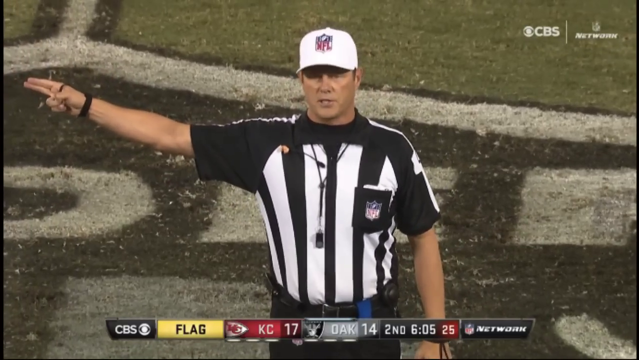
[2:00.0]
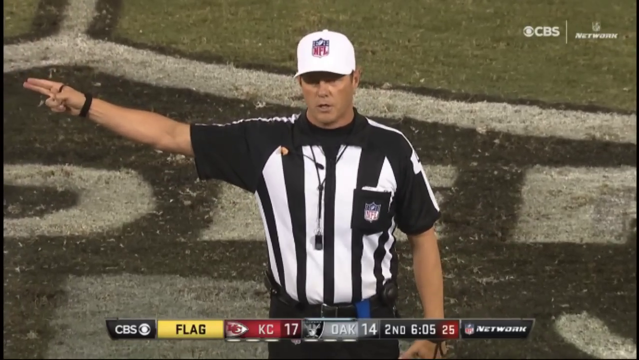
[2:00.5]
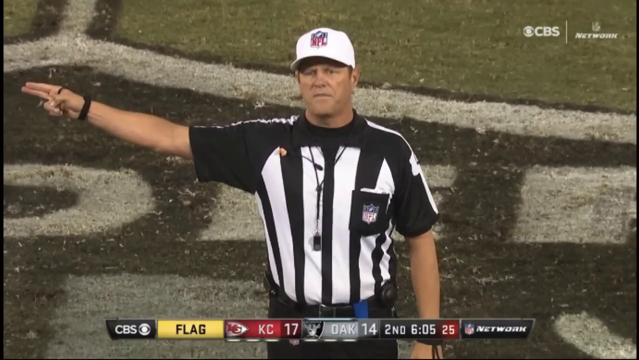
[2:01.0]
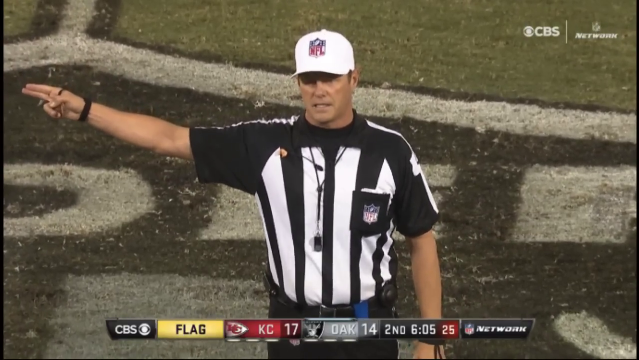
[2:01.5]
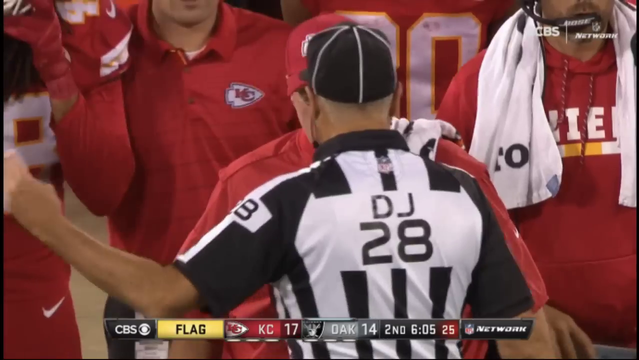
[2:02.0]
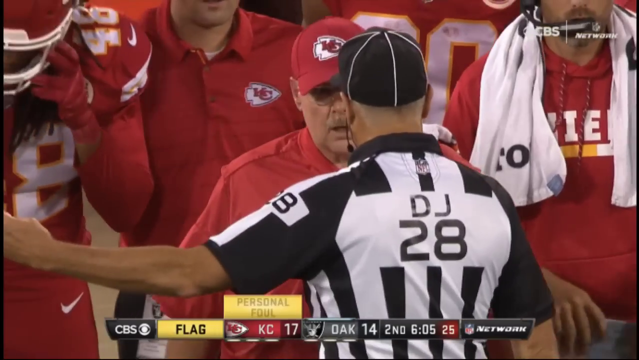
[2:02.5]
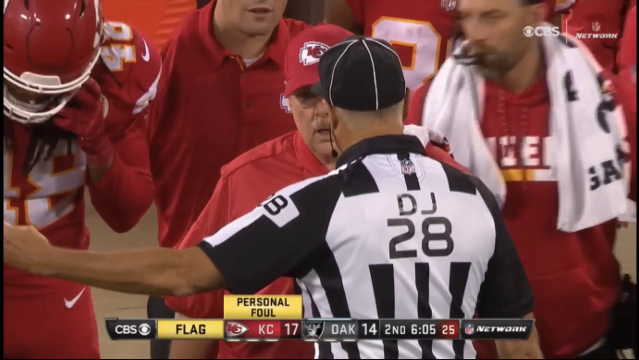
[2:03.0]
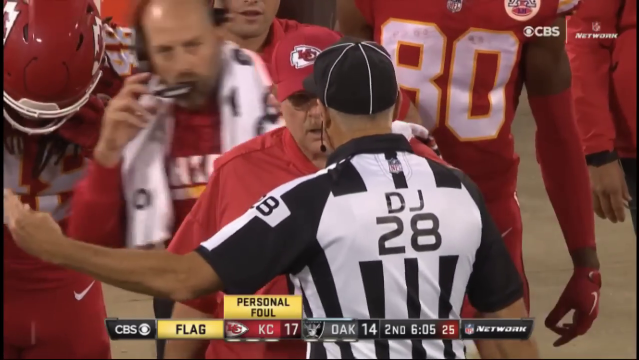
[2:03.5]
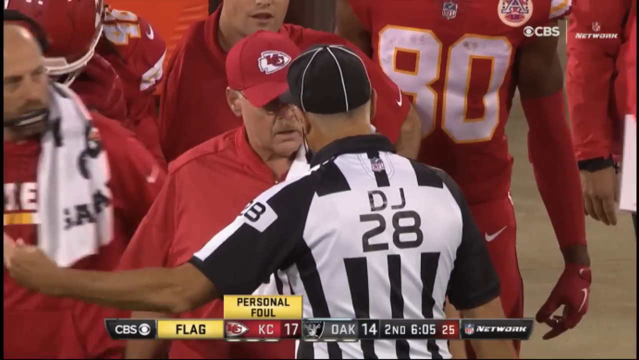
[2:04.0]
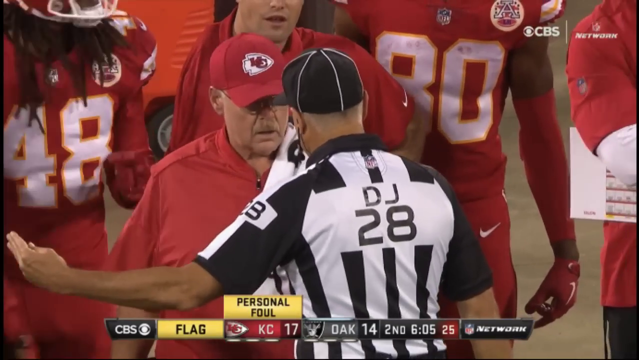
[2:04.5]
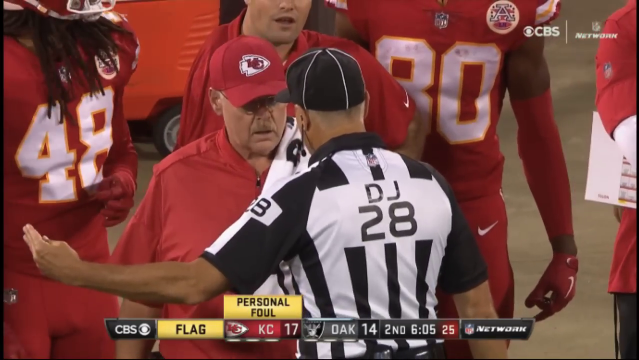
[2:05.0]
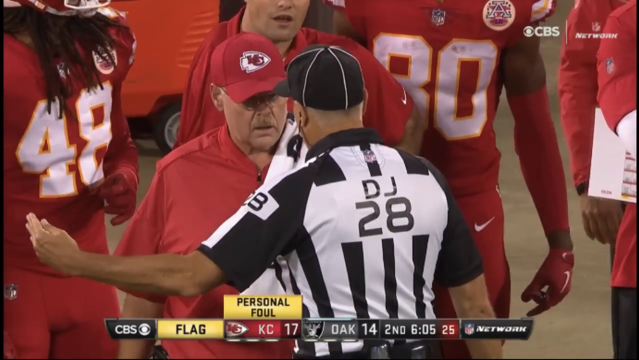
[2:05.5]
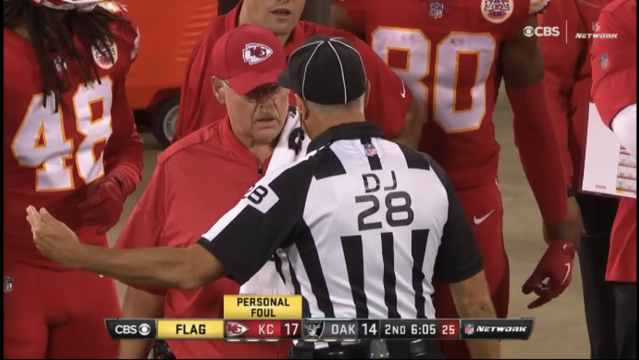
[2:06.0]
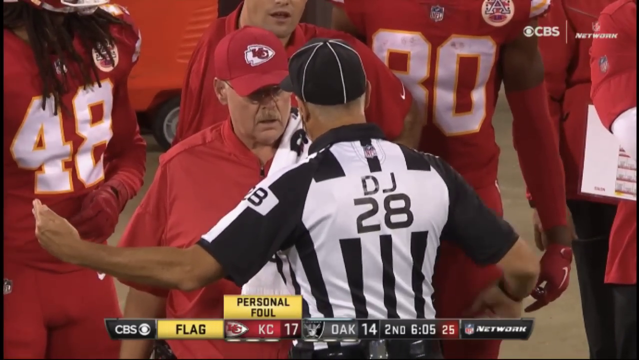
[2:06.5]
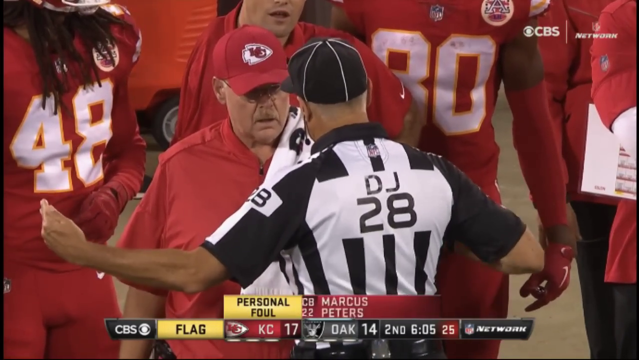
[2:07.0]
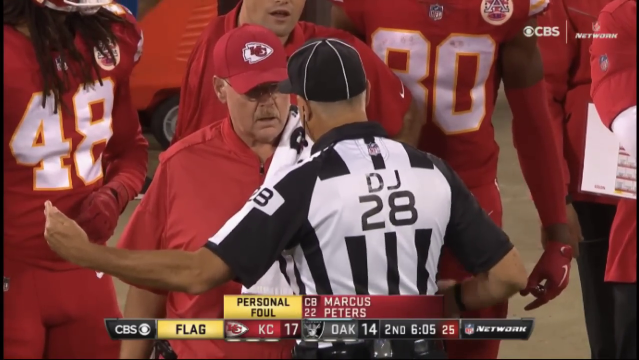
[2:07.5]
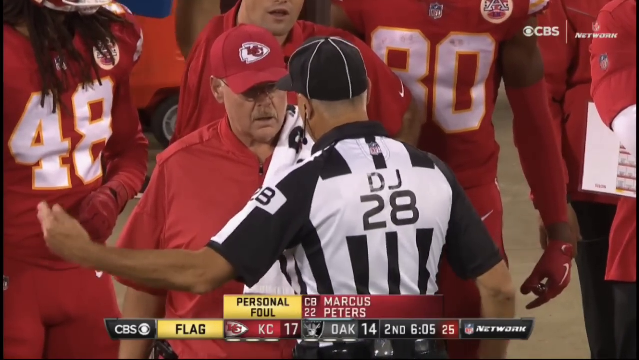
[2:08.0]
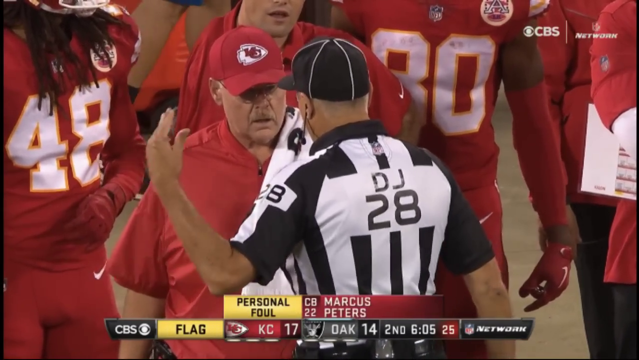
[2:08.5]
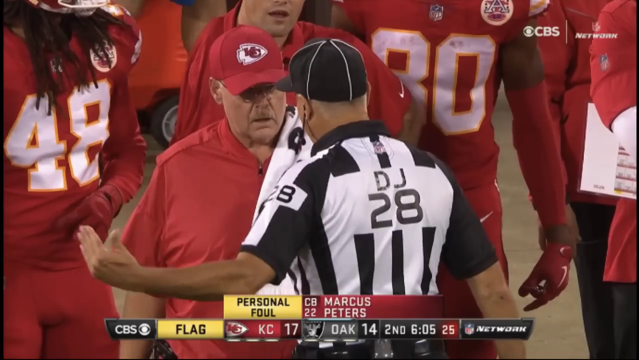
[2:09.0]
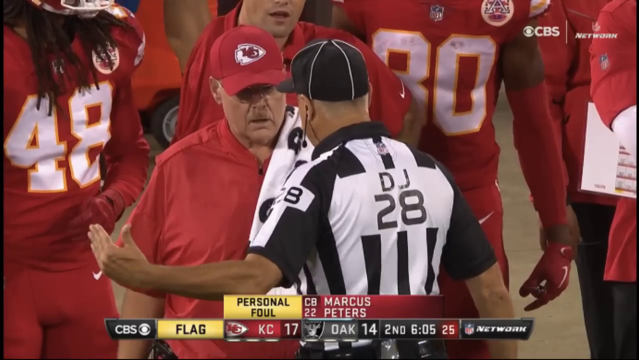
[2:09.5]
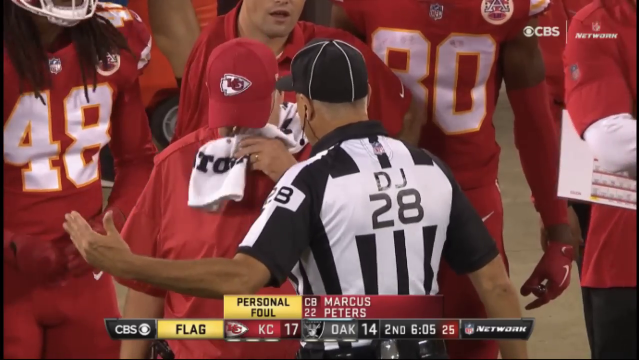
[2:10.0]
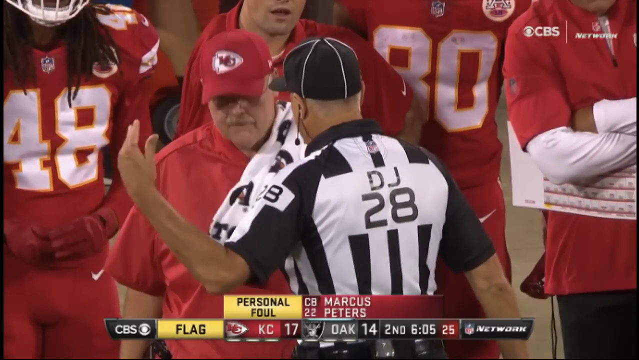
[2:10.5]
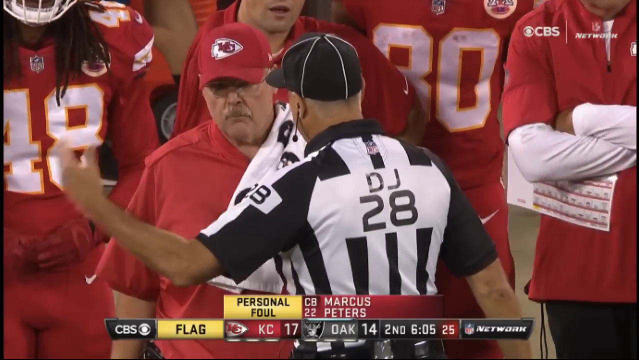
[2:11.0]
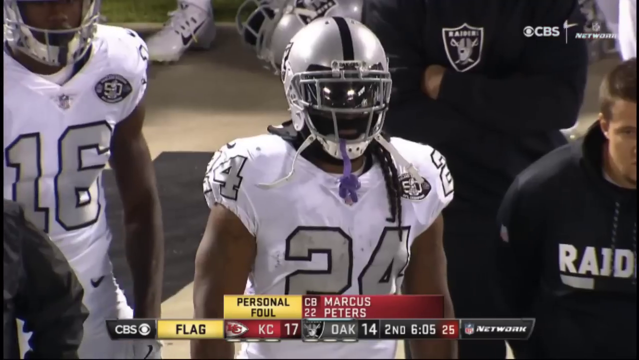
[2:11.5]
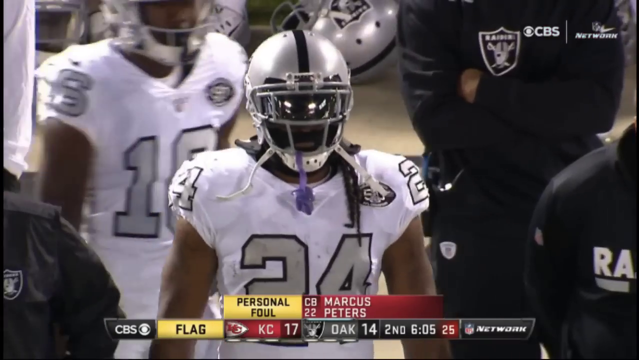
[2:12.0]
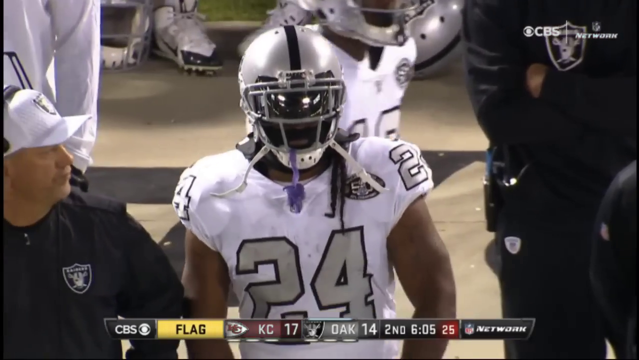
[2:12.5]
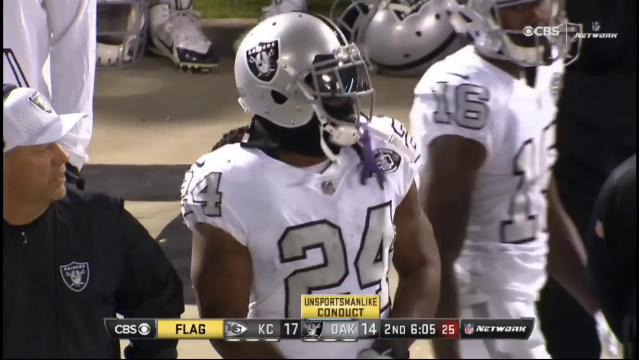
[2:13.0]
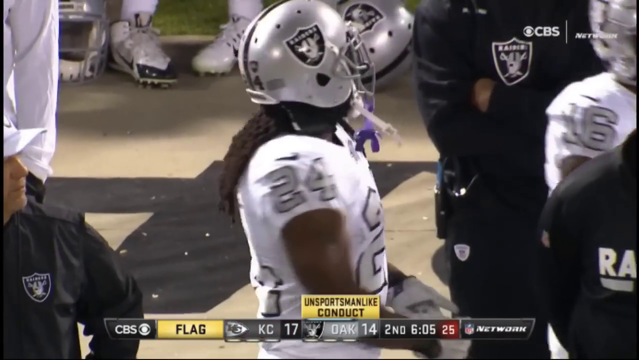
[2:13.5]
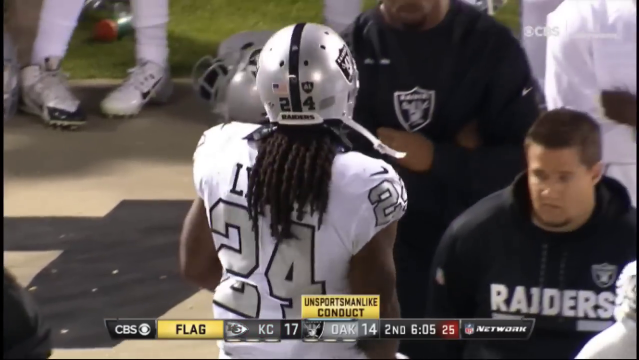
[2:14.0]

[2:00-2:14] The video is titled Marshawn Lynch Gets Ejected for Grabbing a Referee, Chiefs vs. Raiders NFL. A traditional football play ends in a quick altercation between Chiefs and Raiders players. One of the Raiders players grabs at a referee, who quickly throws up a yellow flag. More referees come onto the field separating the Chiefs and Raiders players. In a split screen, the referees discuss the play on the left side, and an up-close shot of the altercation between number 24 and the referee is on the right side. Number 24 on the Raiders leaves the field as more referees come in to discuss what happened. Along the bottom of the screen, the scoreboard reads "Kansas City Chiefs 17 points vs. Oakland Raiders 14 points." The sidelines show both coaches discussing what happened with their players and the referees. Finally, a referee comes to the middle of the field and announces the final call of the play using hand signals.